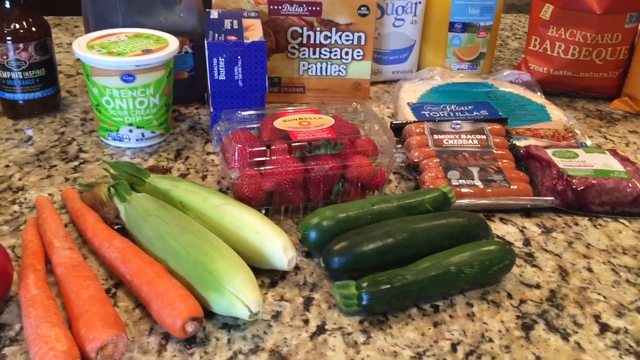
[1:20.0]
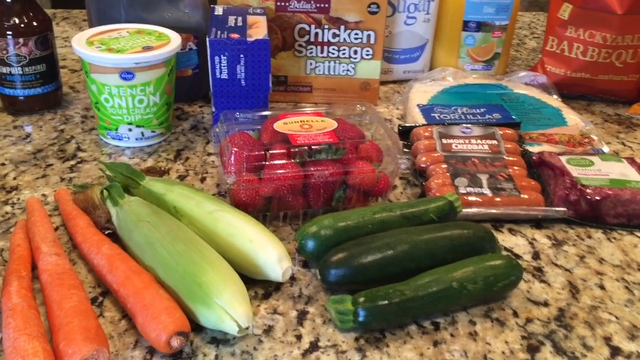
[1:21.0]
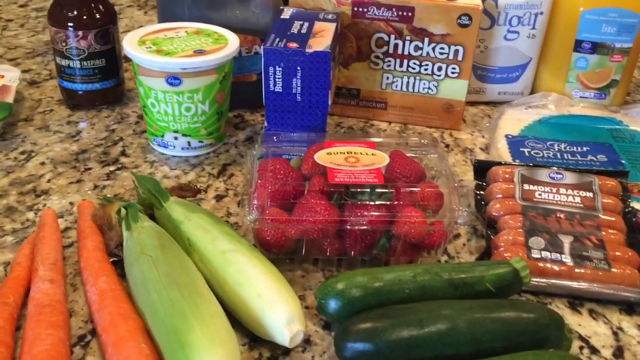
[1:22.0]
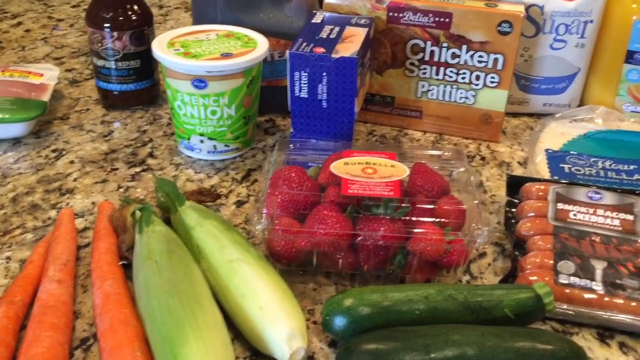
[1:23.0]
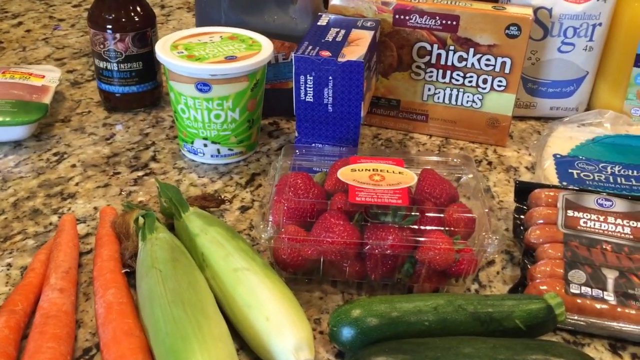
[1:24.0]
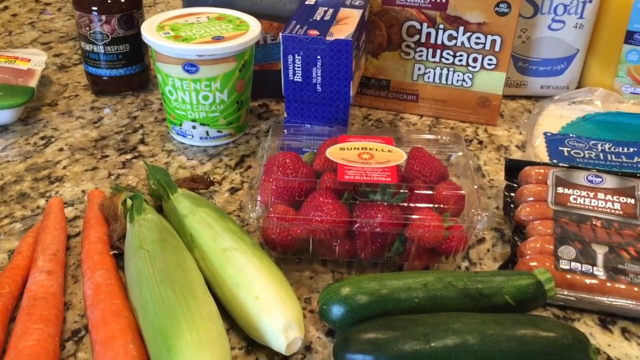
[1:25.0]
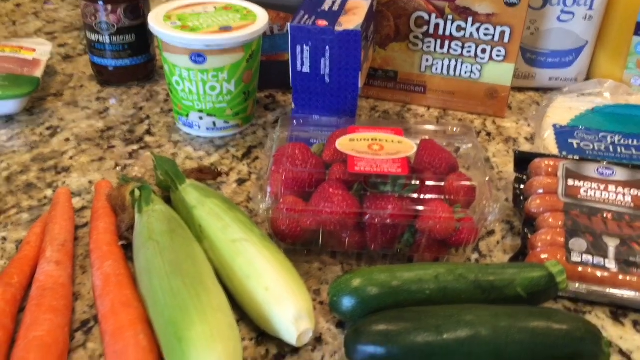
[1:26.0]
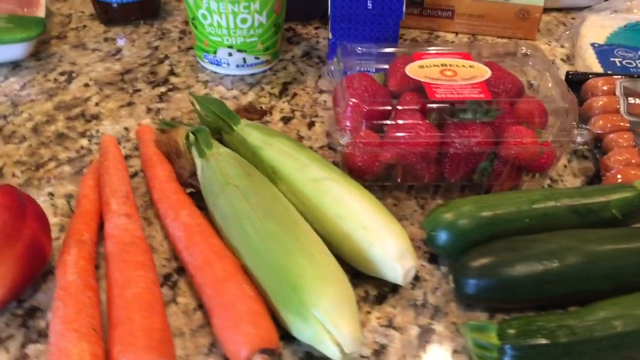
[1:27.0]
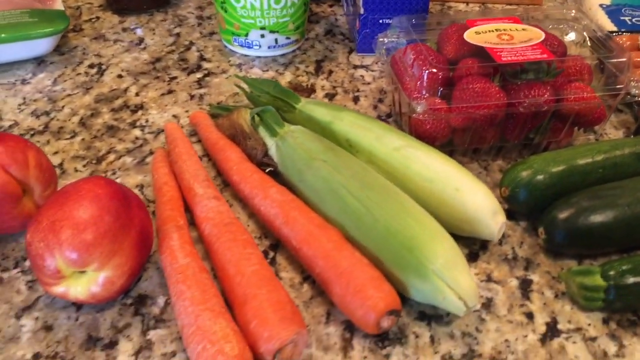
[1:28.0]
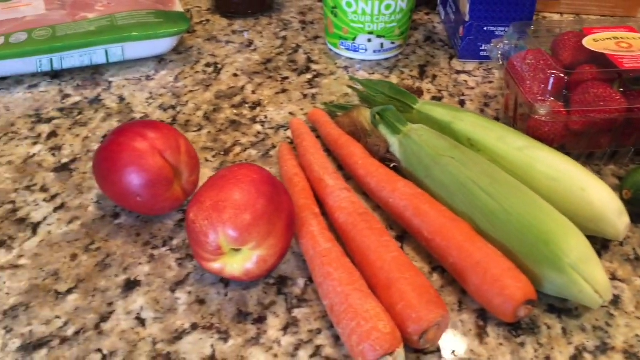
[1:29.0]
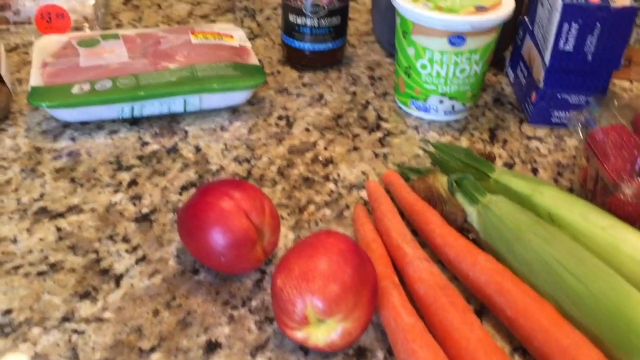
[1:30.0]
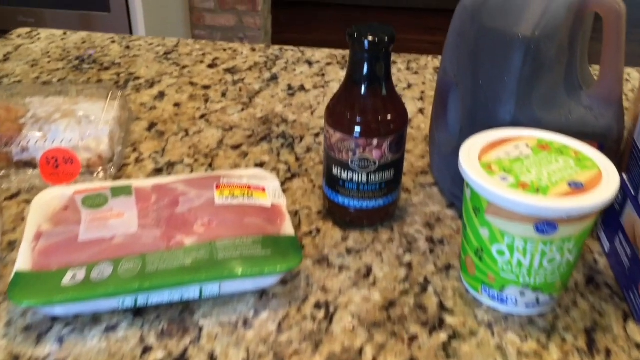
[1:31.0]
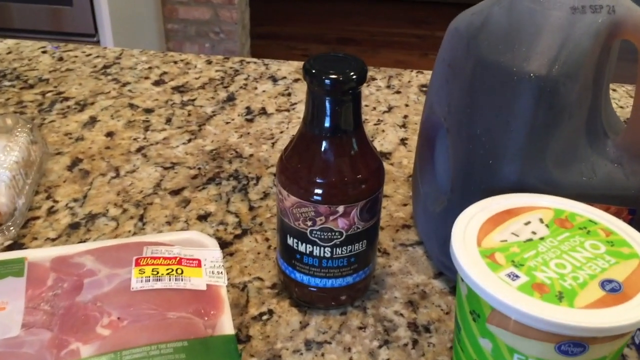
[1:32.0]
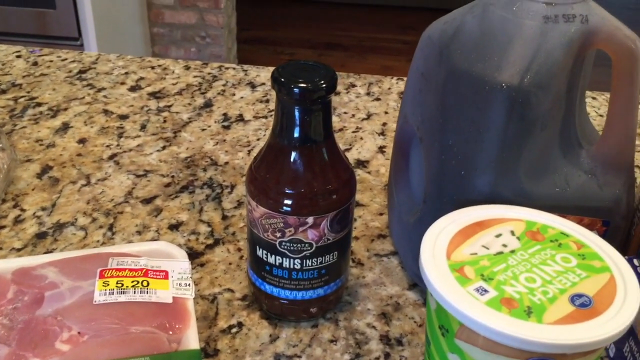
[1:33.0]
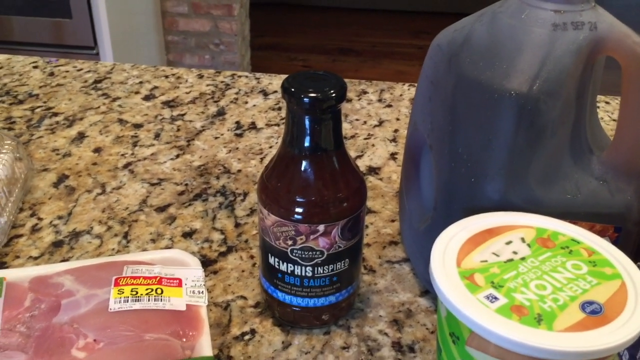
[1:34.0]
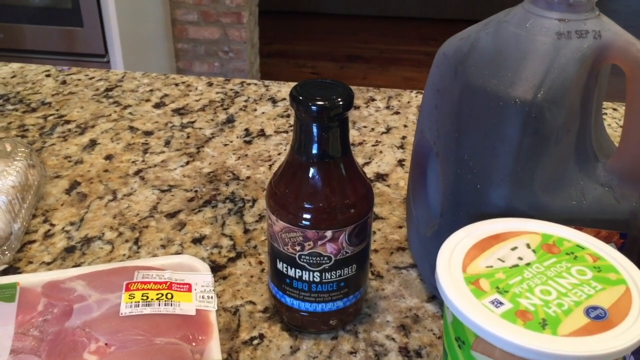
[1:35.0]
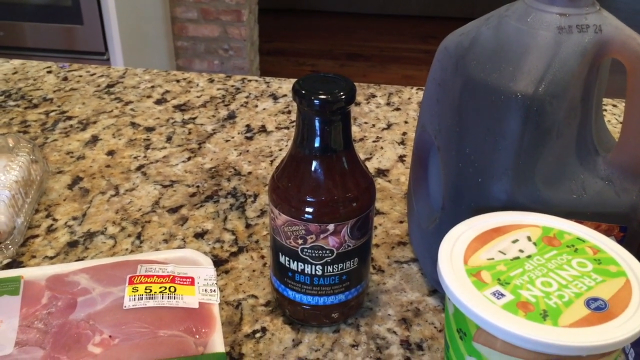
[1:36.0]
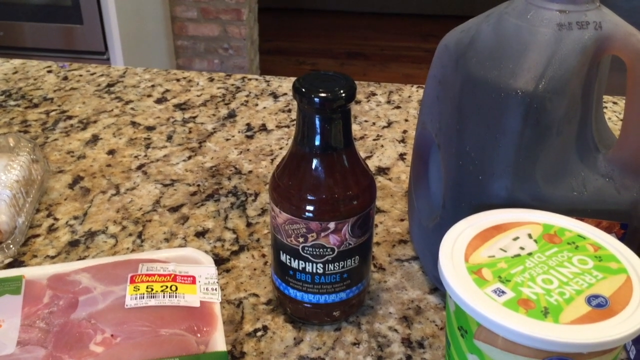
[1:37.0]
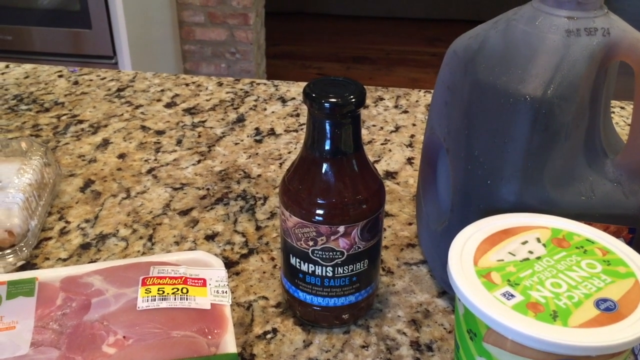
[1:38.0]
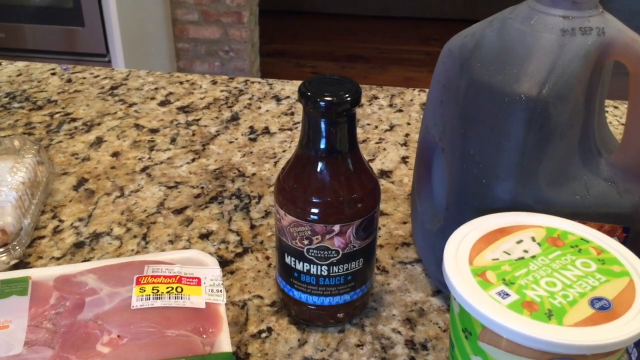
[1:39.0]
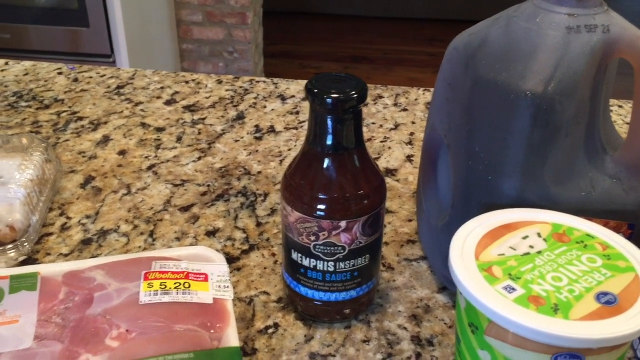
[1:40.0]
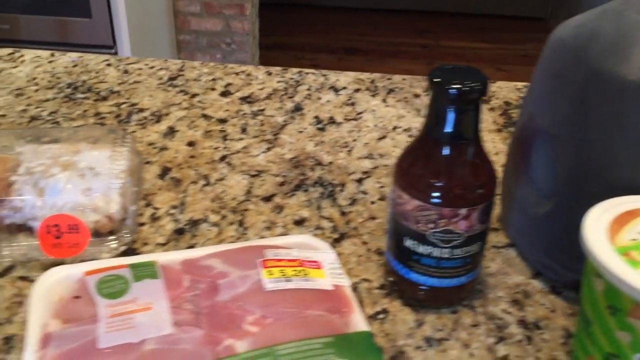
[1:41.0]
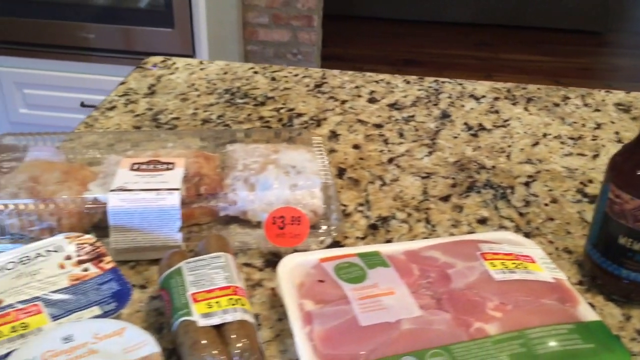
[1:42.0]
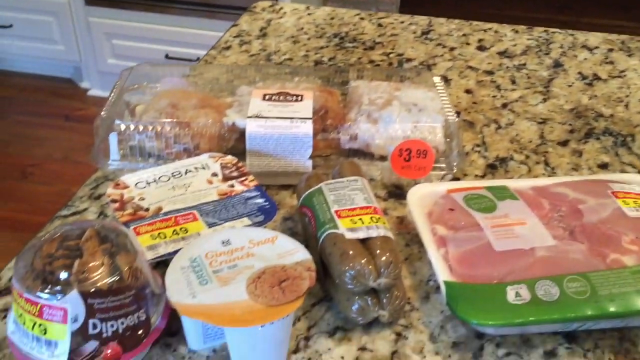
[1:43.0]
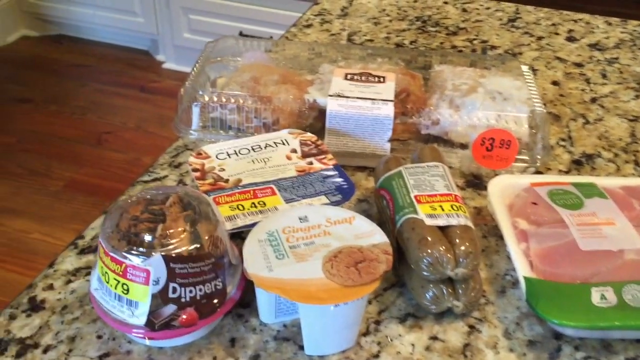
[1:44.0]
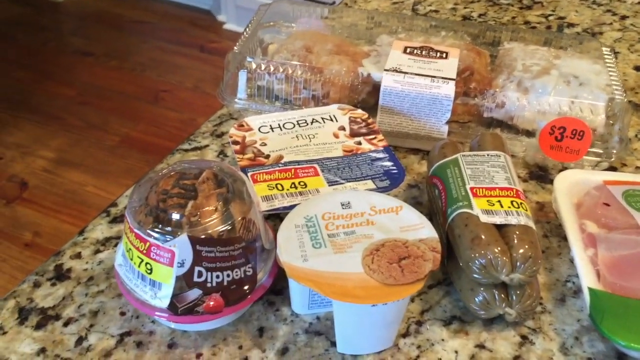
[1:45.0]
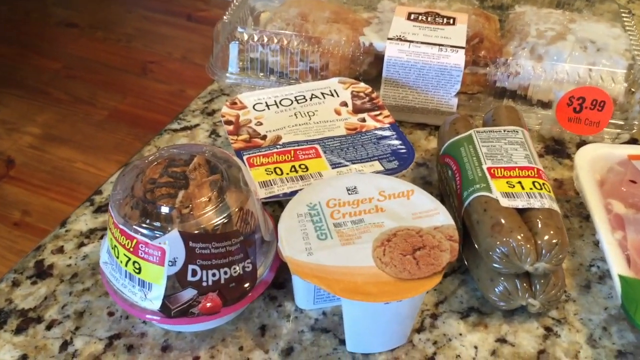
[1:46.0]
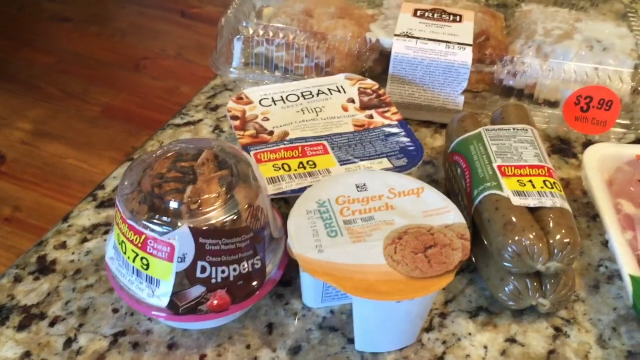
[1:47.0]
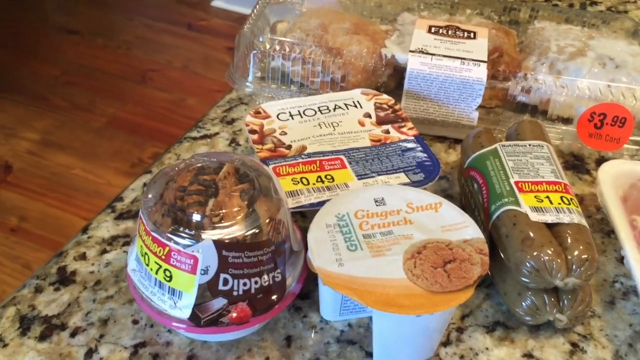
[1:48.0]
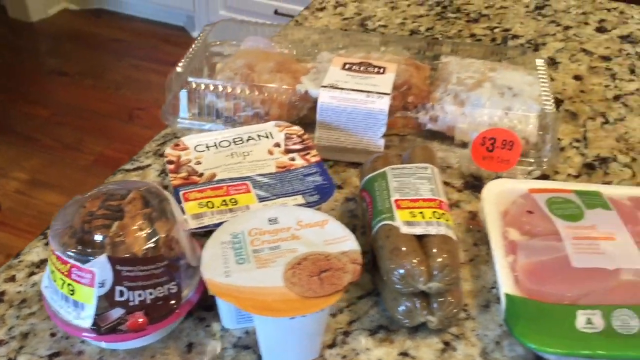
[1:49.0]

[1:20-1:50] The groceries continue to be shown, apparently just to display what was bought rather than to cook. Among the many items are several knives, some sausage, and some meat.